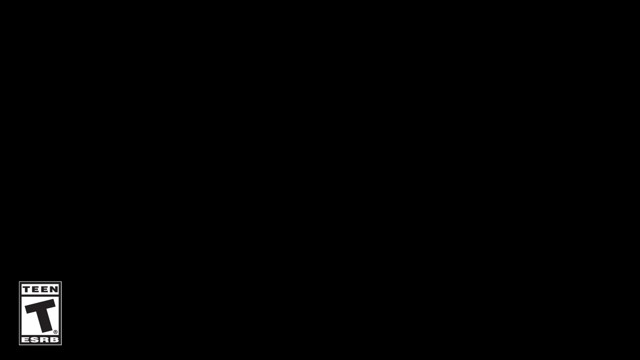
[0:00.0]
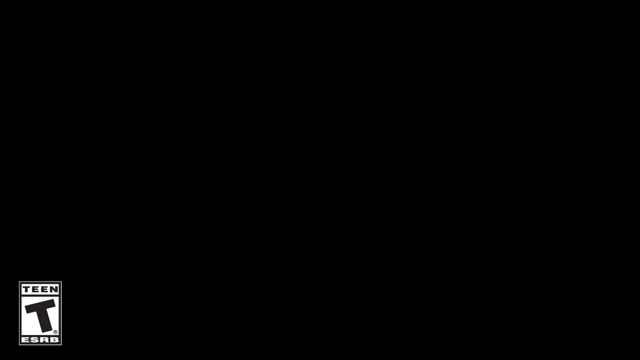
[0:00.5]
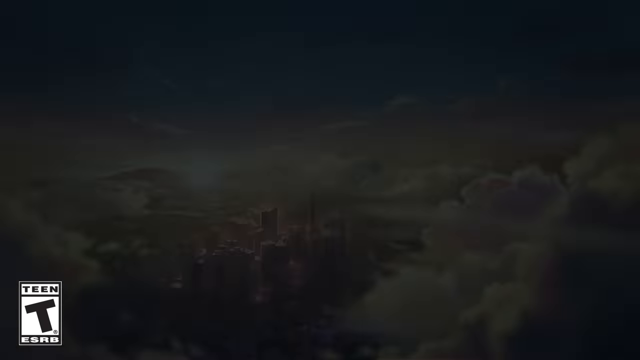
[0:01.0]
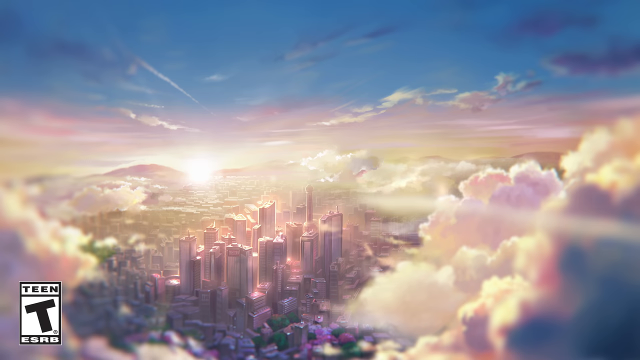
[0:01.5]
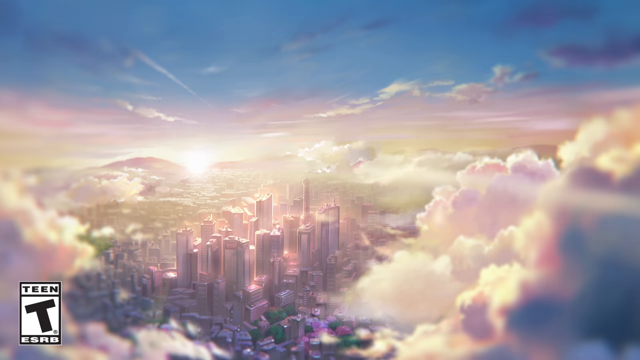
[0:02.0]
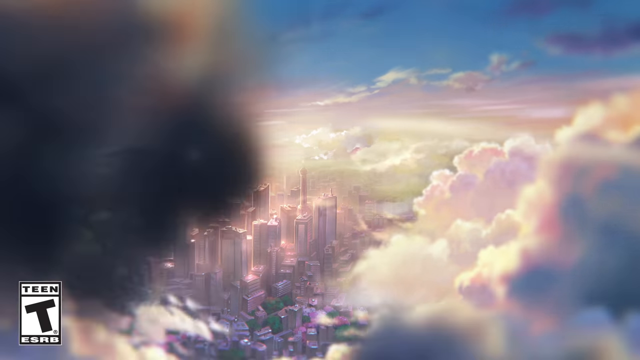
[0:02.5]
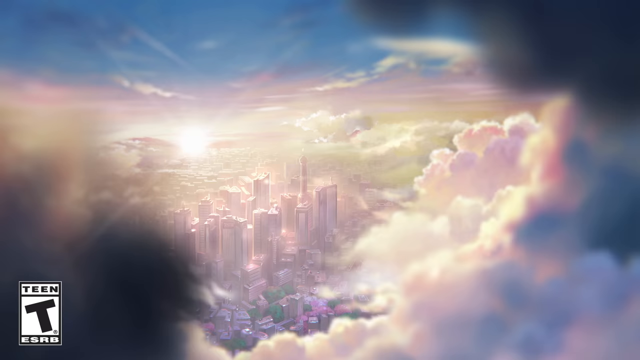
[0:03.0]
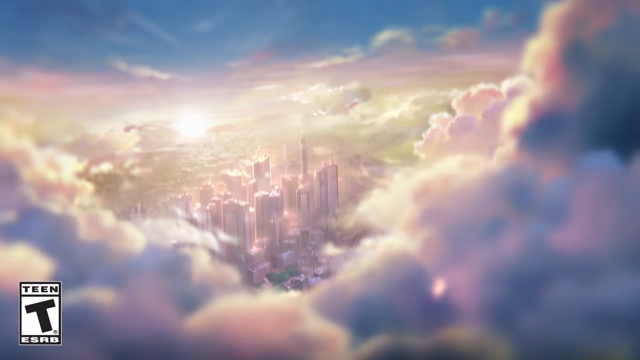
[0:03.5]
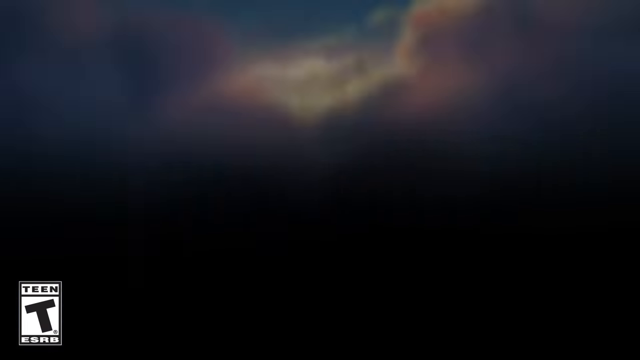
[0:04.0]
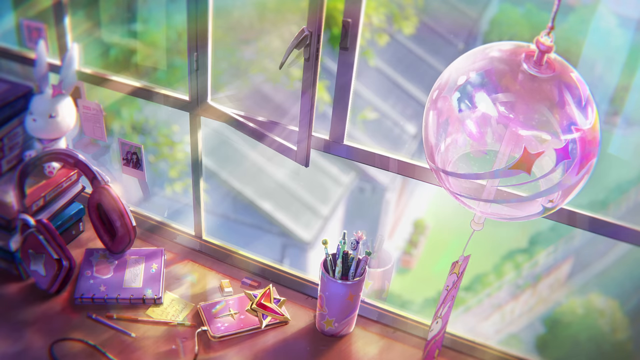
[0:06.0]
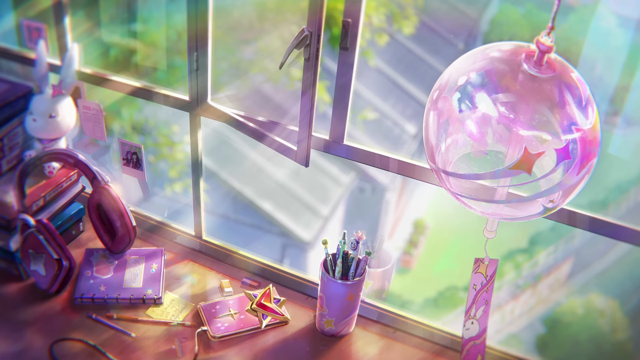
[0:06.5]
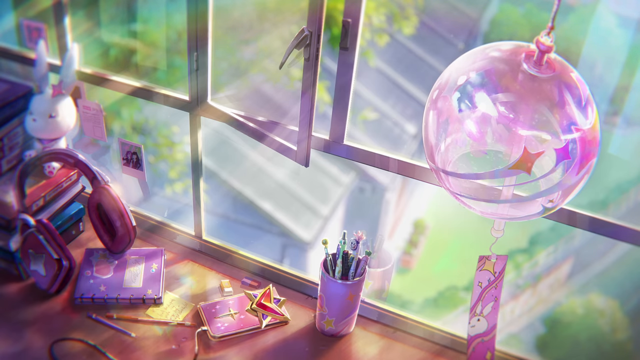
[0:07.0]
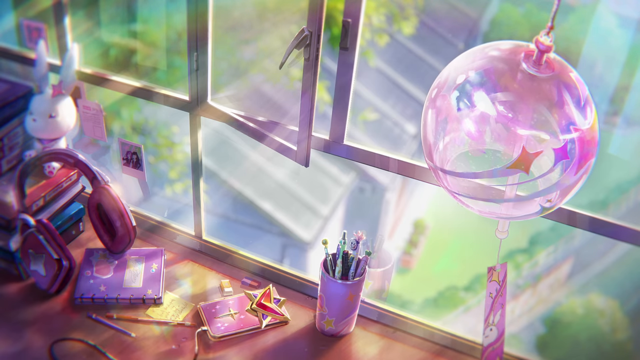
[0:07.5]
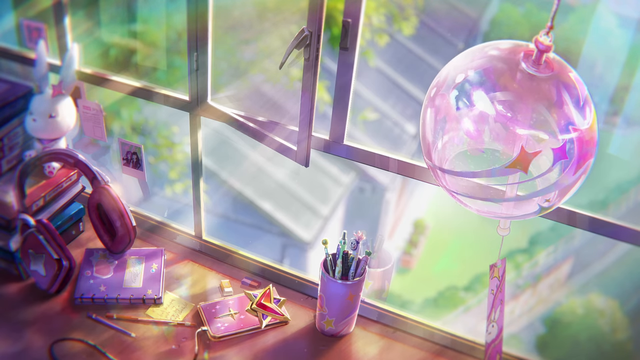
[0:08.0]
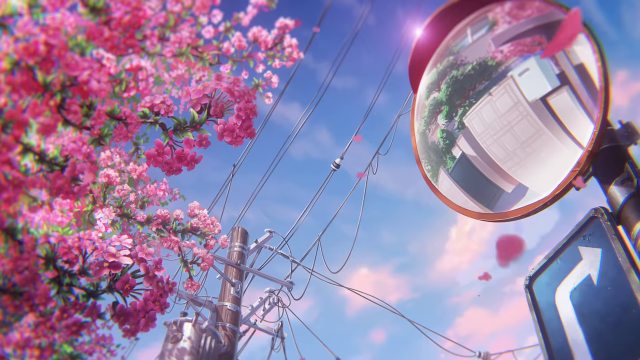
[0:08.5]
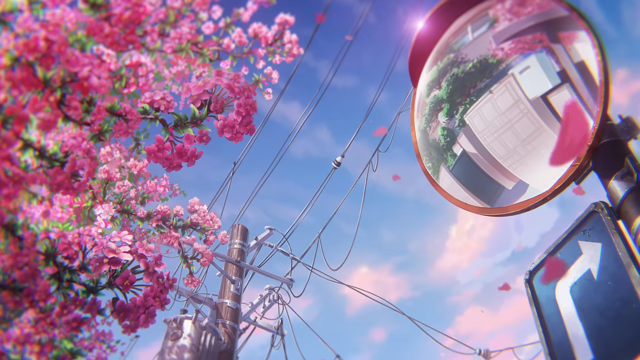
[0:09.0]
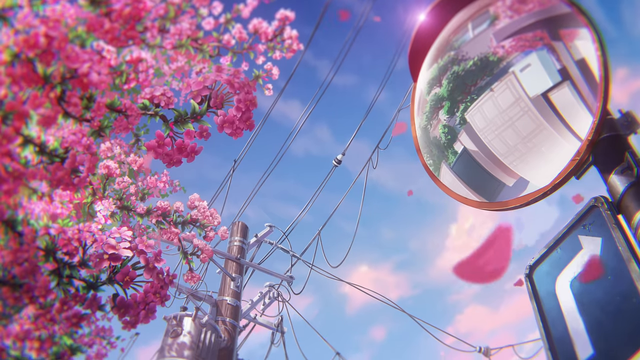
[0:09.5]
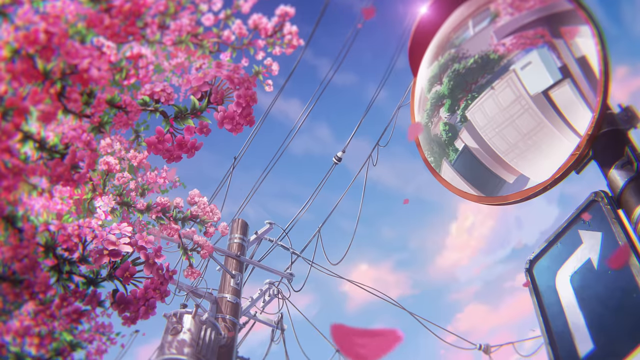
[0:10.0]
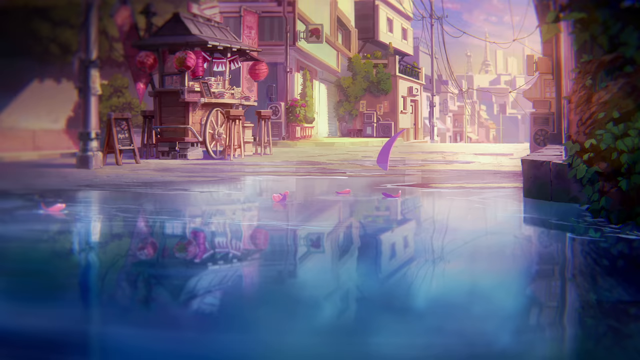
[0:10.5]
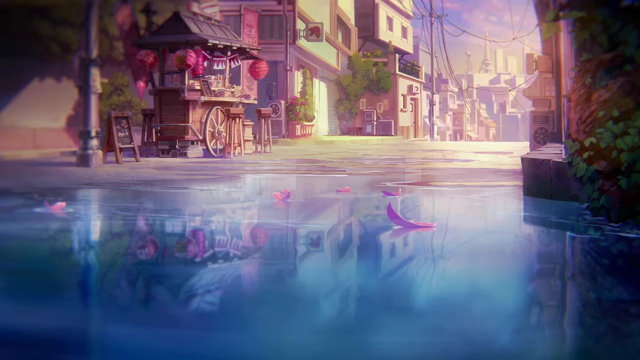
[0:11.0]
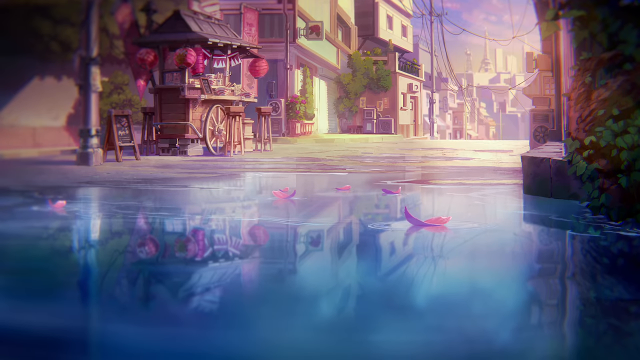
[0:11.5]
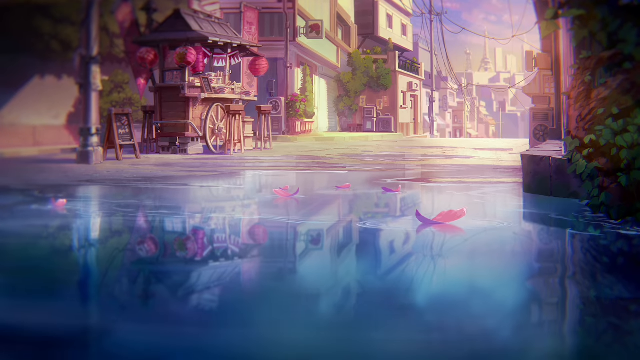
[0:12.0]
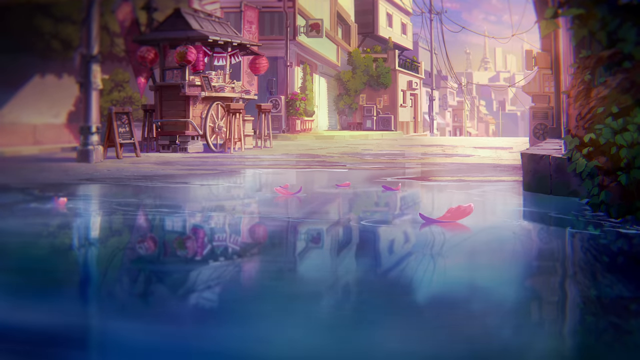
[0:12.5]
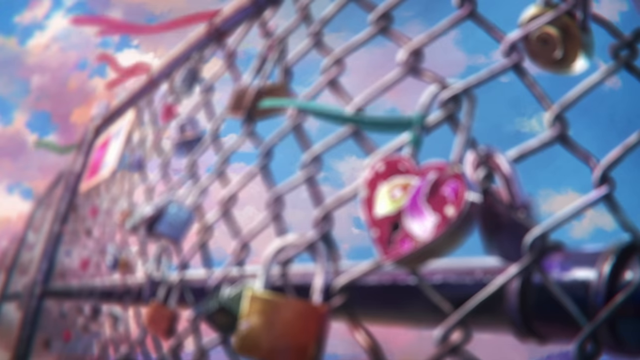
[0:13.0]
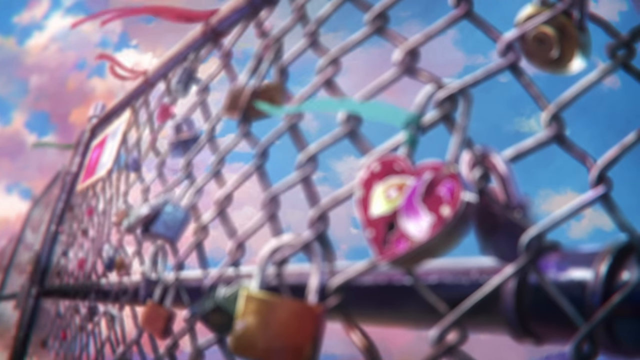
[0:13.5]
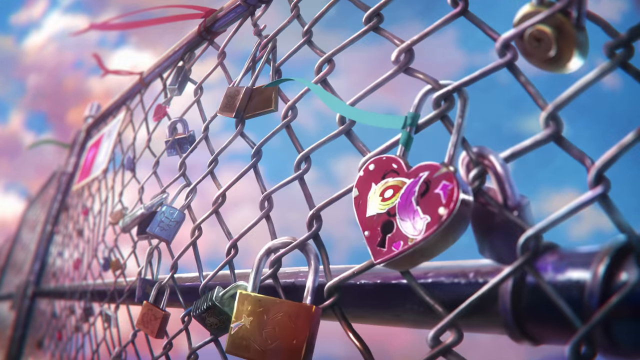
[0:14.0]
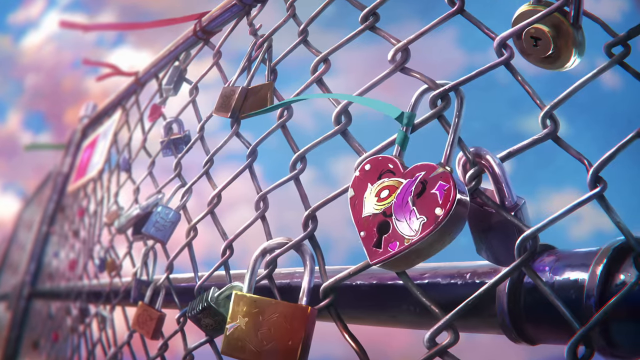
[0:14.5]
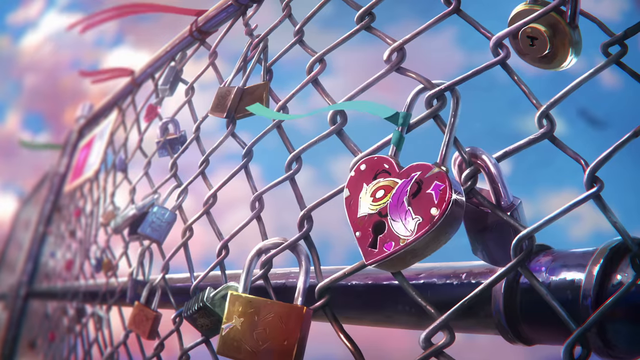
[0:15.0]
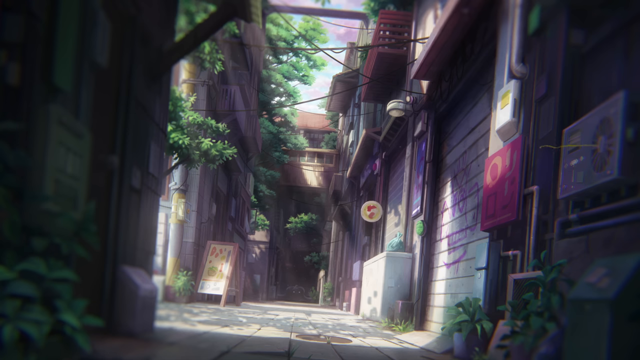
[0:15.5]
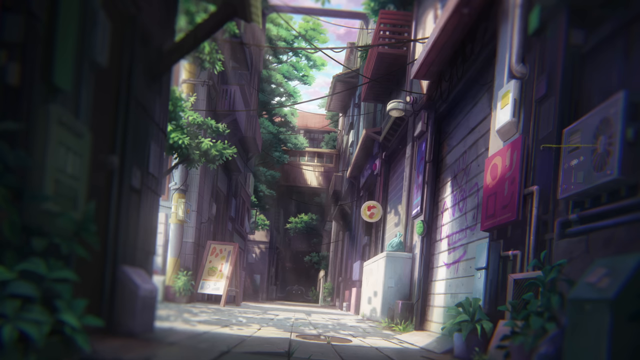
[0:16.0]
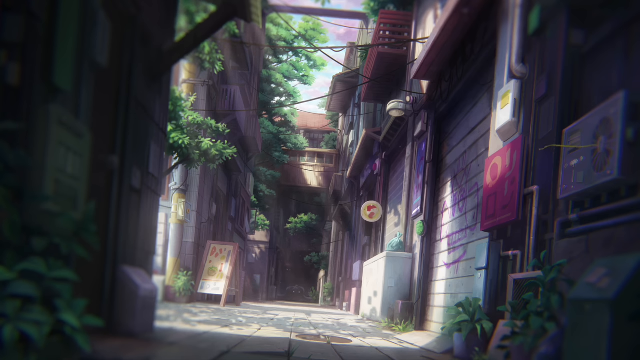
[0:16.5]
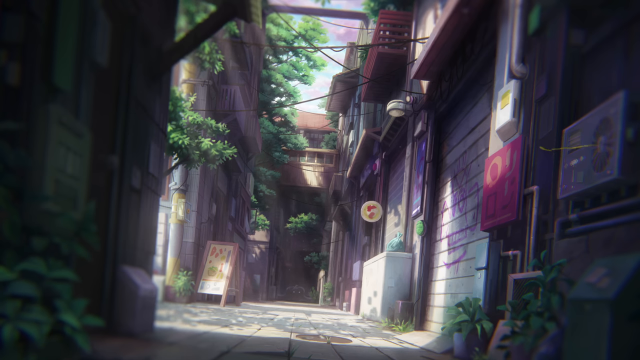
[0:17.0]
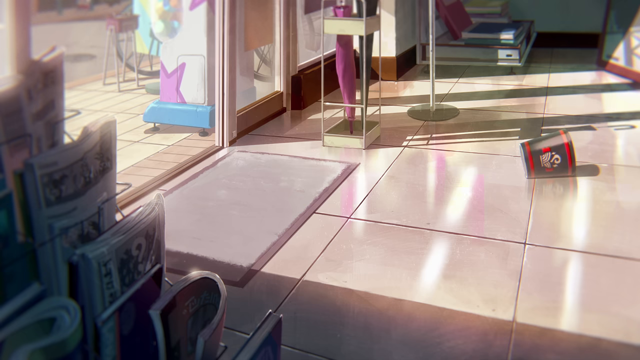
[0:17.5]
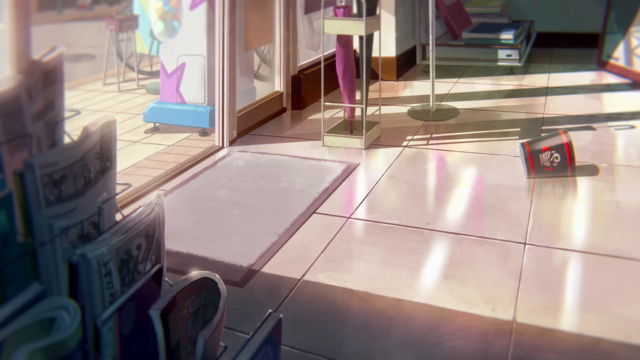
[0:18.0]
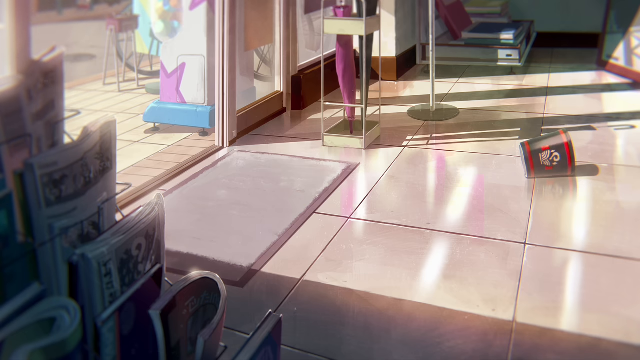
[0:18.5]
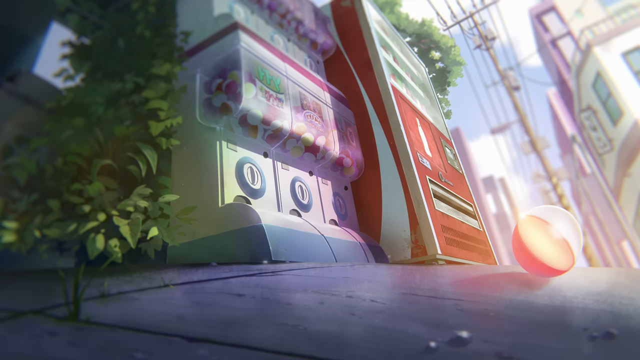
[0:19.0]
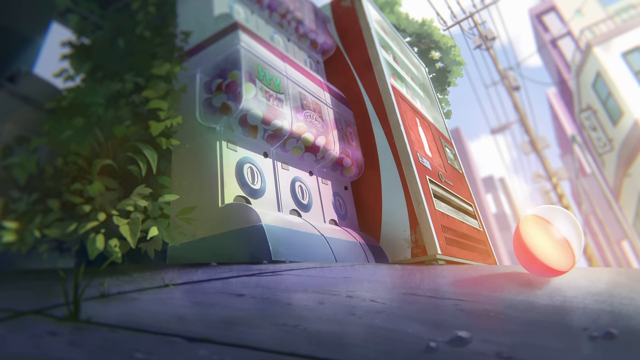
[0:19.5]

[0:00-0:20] Titled Return to Vlorian City, this cartoon is an official event teaser for what looks like a game set in the city. It opens on the city and the clouds. A rating appears in the very bottom left-hand corner. The colors are very pastel, with pink, and the game looks very soft and calm. The outside of an area is shown, including a bridge with locks all over it. One shot is from the inside, at a desk looking outside, with a little bunny on the desk; there are also headphones on the desk. There also appears to be a shot of the inside of a store. The video looks very calm and serene.